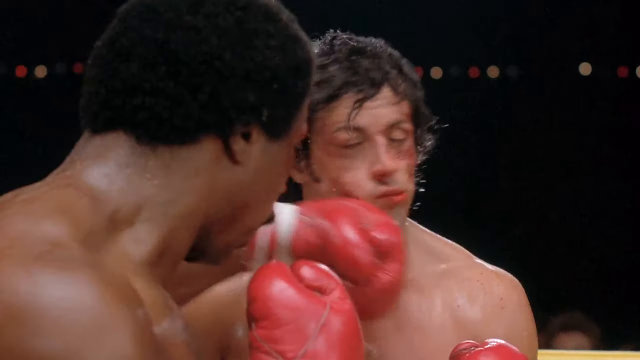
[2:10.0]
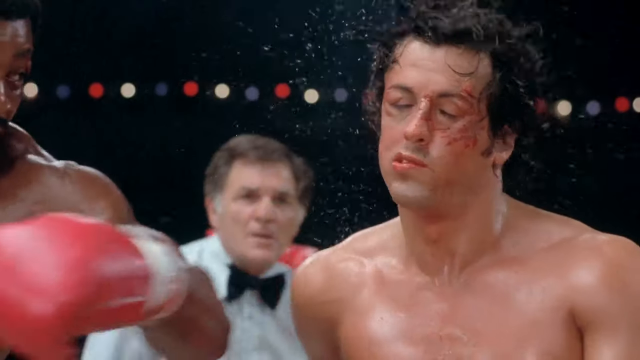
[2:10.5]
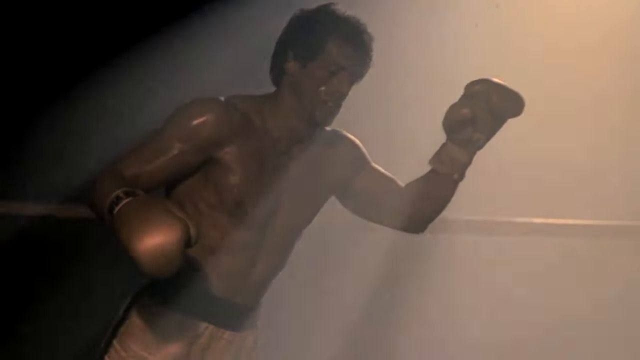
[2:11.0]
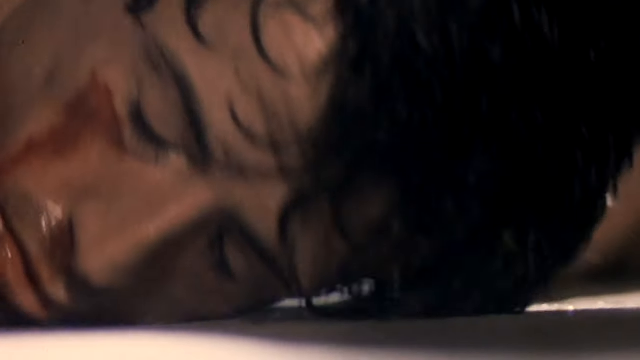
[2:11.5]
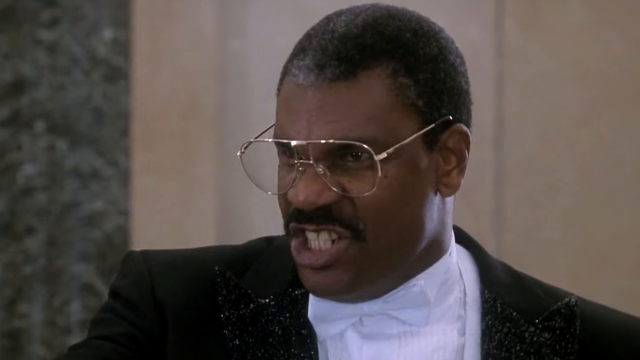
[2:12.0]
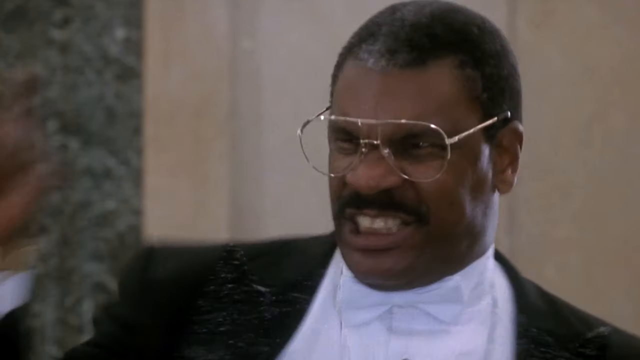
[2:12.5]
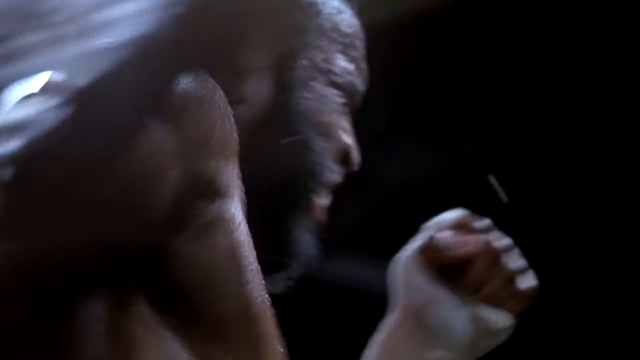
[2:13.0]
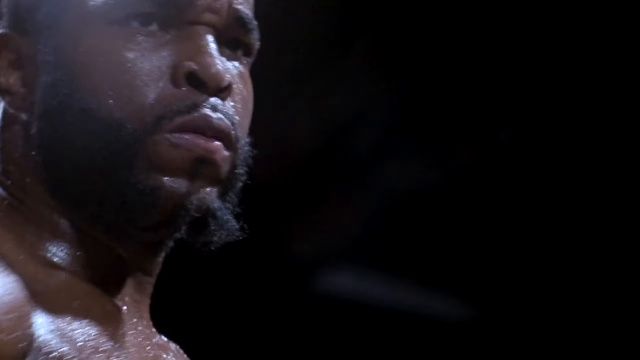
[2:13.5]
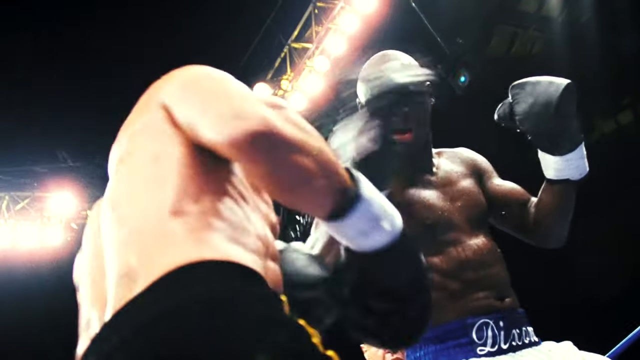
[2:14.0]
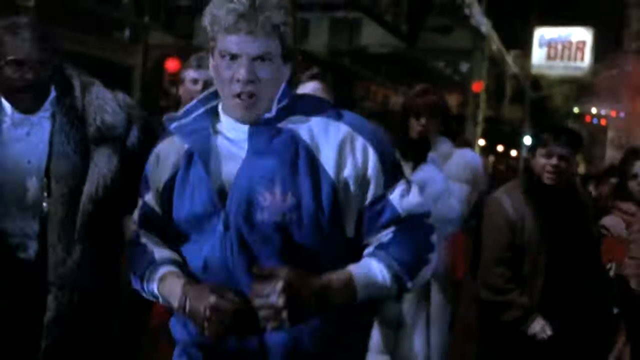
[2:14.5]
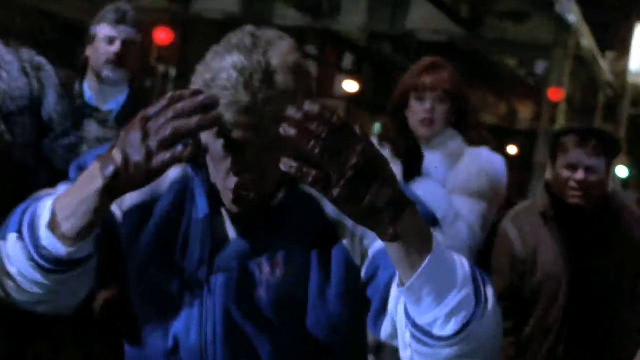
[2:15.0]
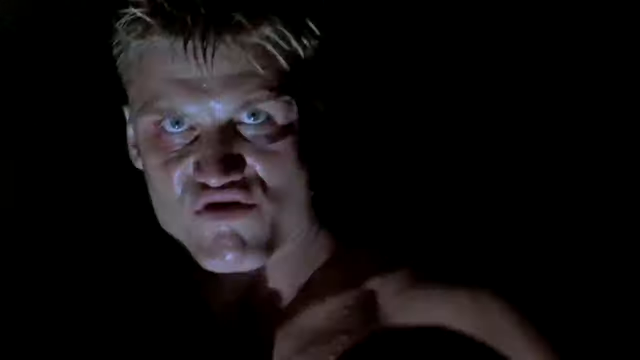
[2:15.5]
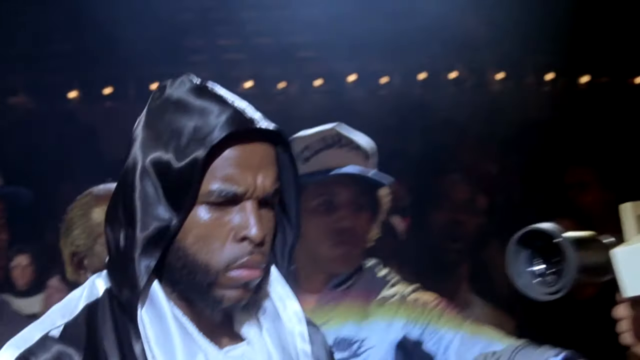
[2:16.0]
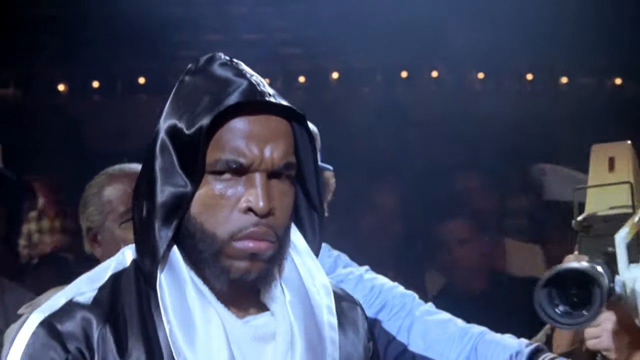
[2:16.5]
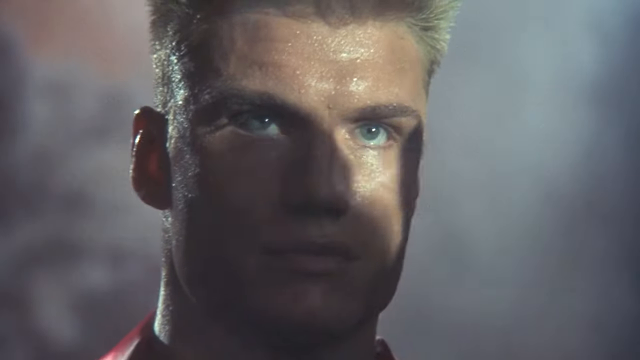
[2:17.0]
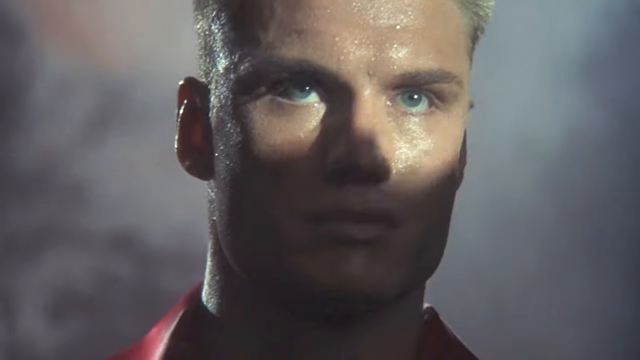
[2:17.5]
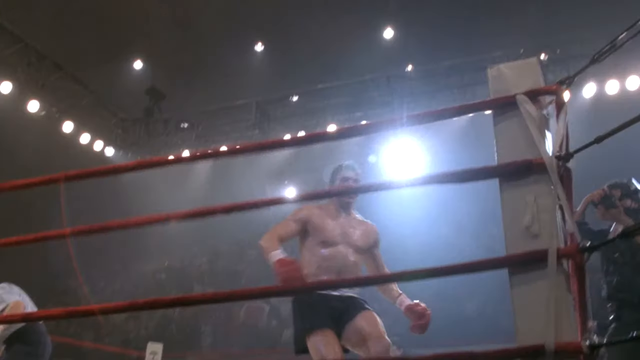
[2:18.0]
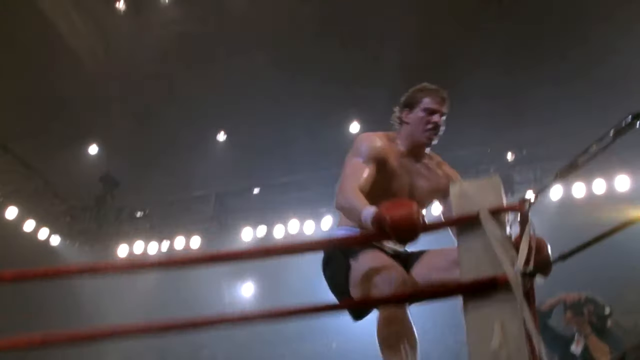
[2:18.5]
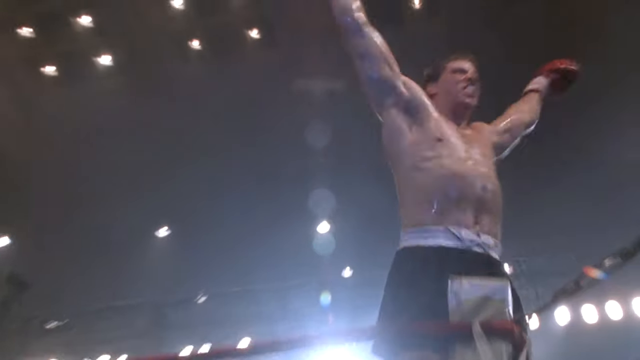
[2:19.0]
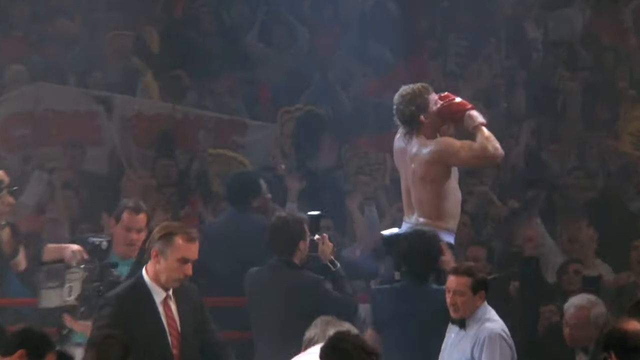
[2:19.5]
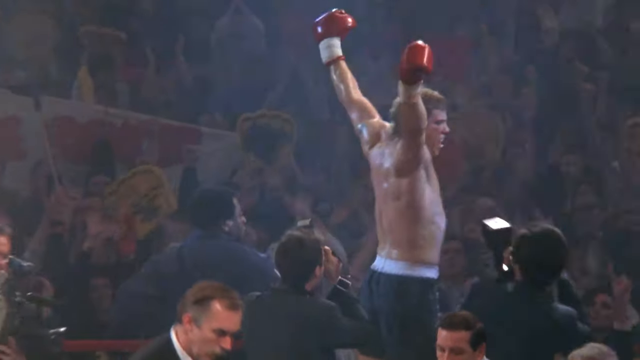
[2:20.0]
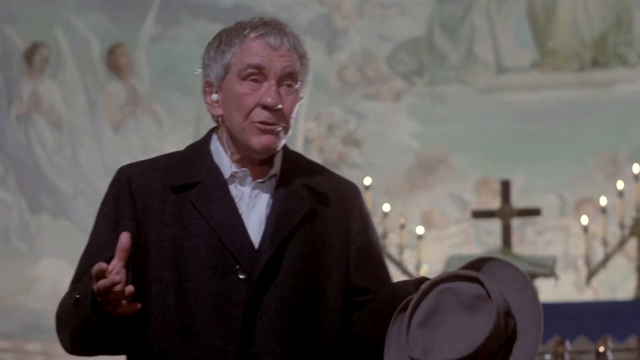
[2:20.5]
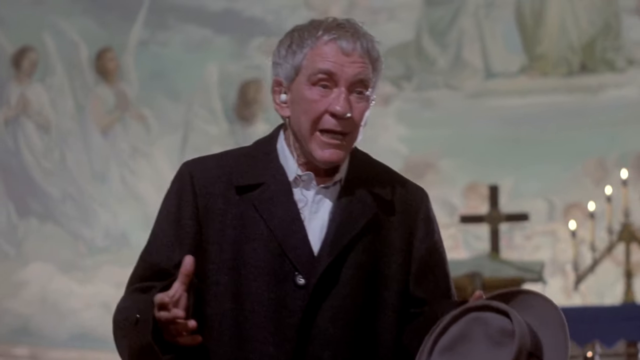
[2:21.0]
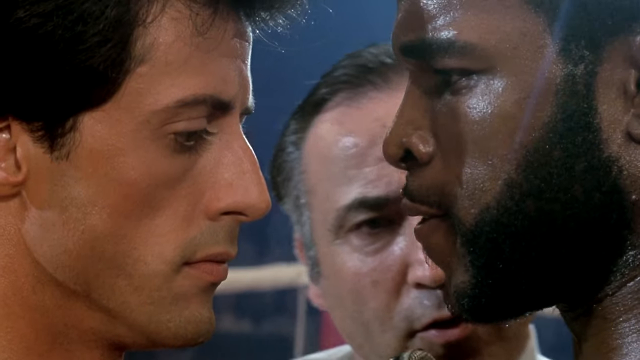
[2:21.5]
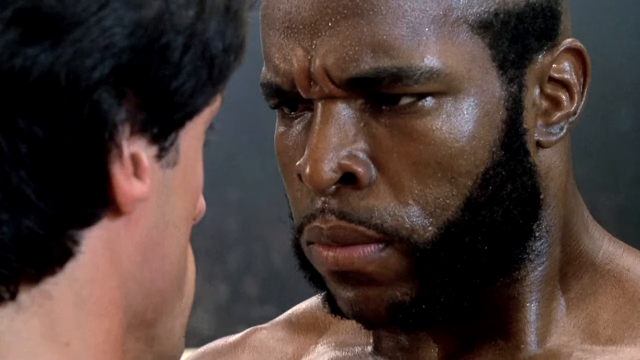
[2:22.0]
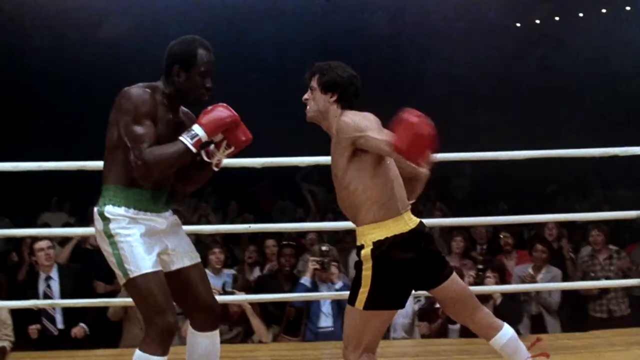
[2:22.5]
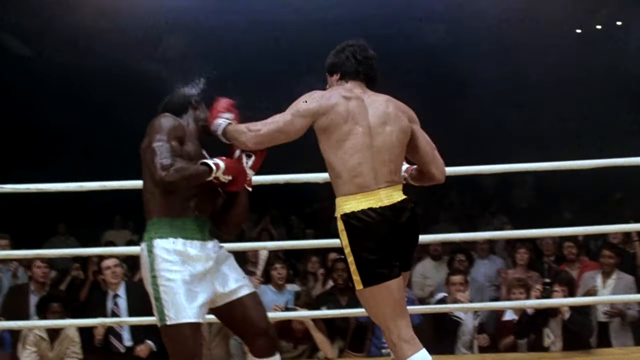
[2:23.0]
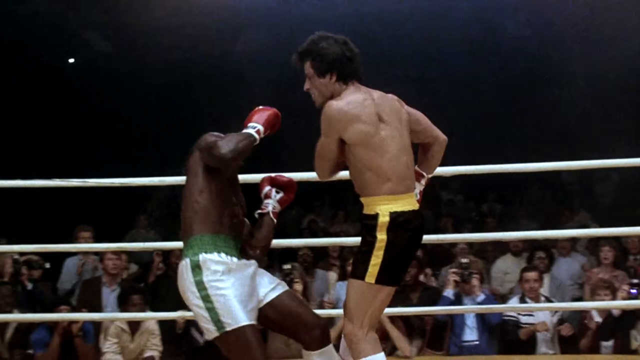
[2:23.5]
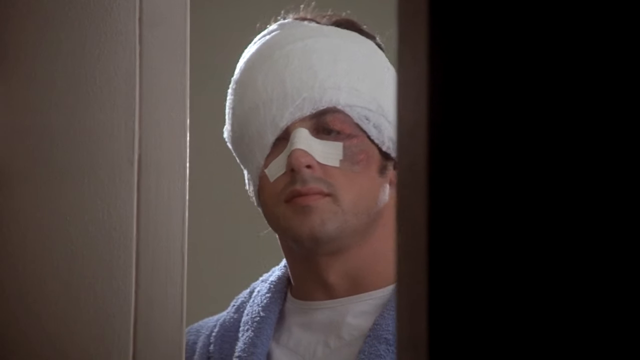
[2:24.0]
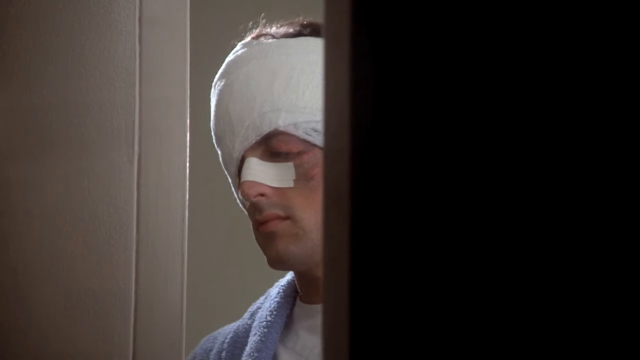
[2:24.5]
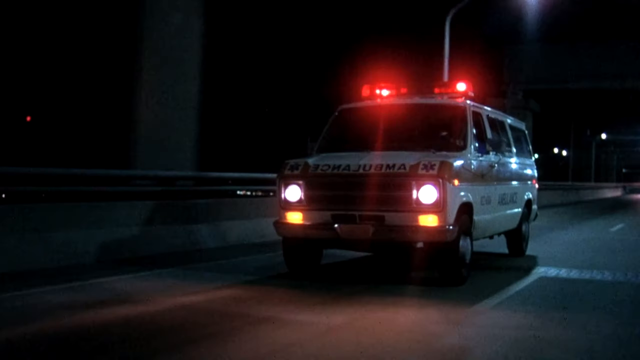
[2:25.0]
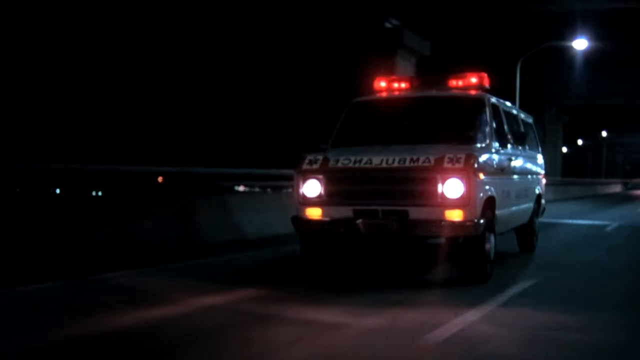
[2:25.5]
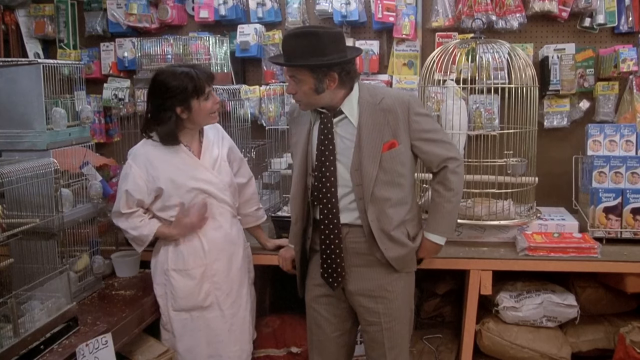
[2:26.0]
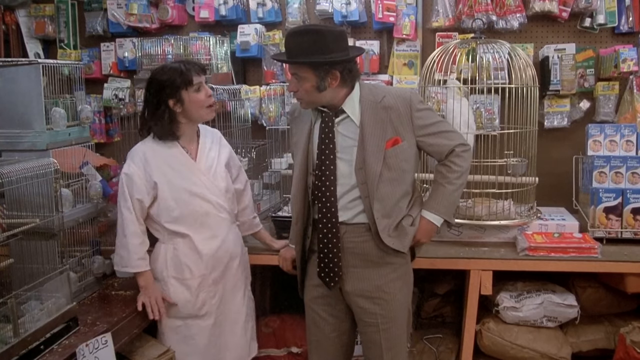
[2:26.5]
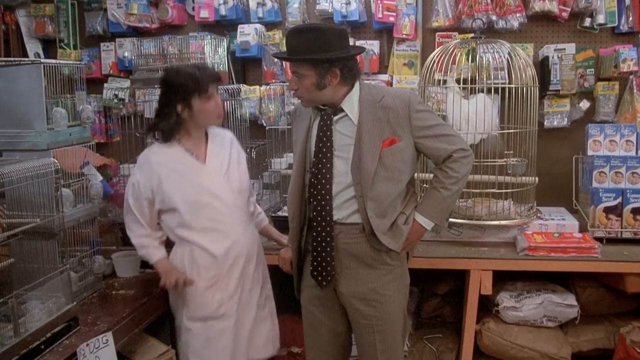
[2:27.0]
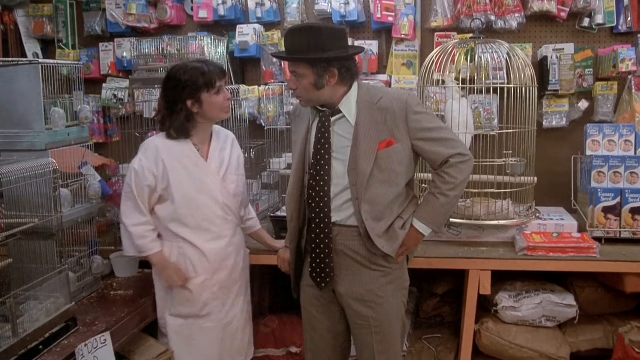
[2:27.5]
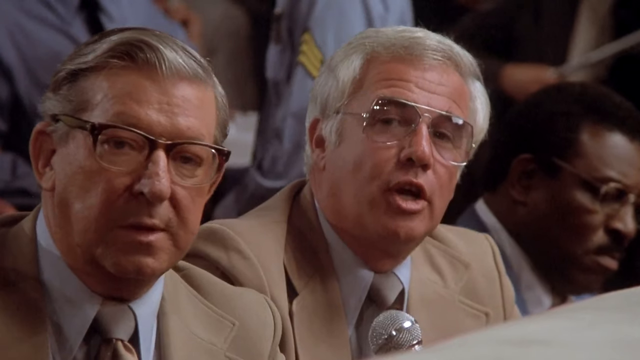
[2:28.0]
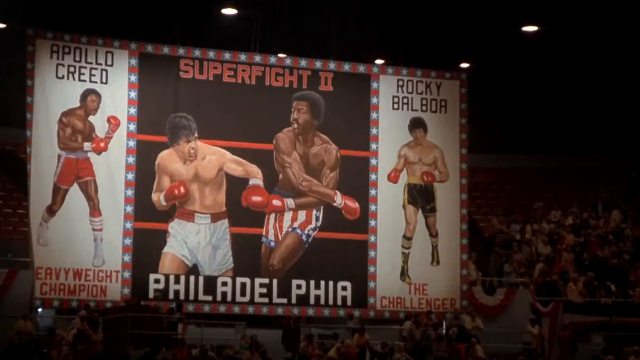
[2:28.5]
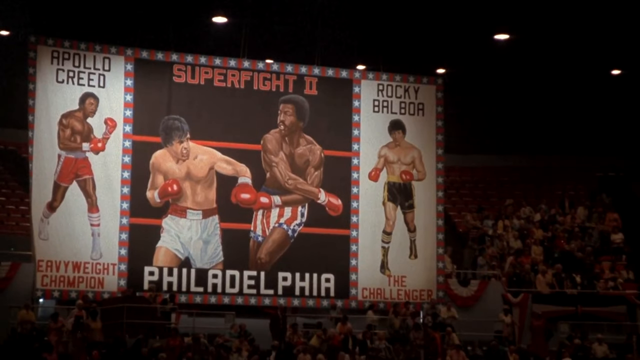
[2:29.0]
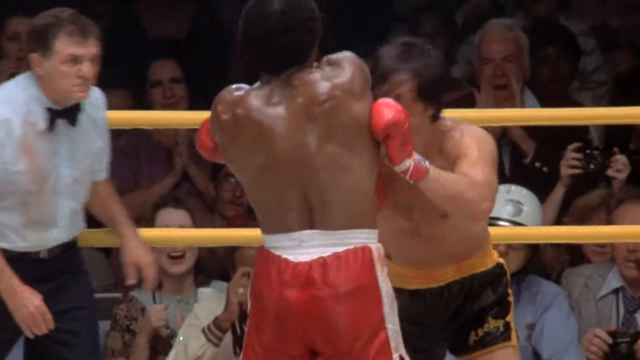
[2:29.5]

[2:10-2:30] The video zooms in on fighting scenes, showing fighters being knocked out in slow motion. Pictures of fighters and the force of the punches are shown, and a black fighter comes in wearing a black hooded jacket. An ambulance is seen, maybe carrying a knocked-down fighter to the hospital. Fighters take very hard punches and are knocked out; some winners stand in the ring cheering, and the crowd cheers as well. The main character talks to a lady, and they seem to be in disagreement. The video appears to be made of clips from a boxing movie focused on this character, his training and intense fights.